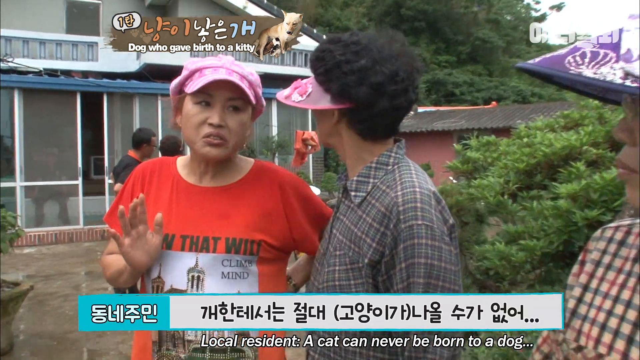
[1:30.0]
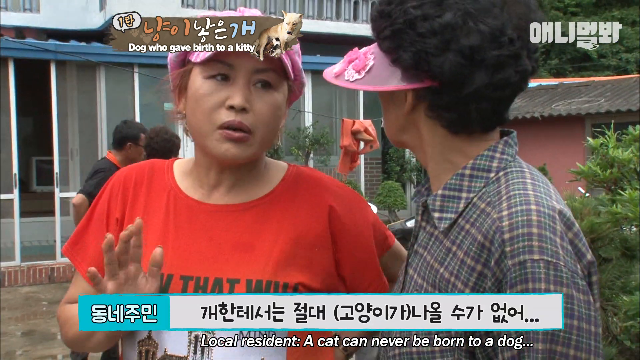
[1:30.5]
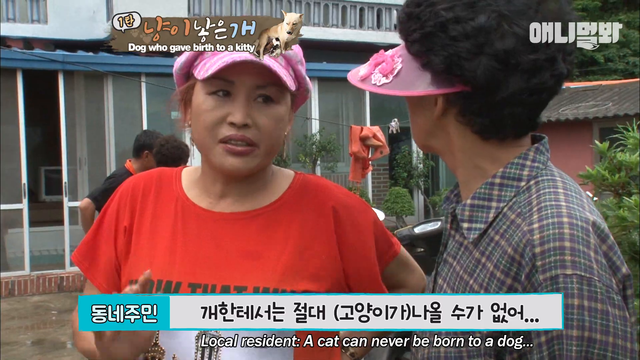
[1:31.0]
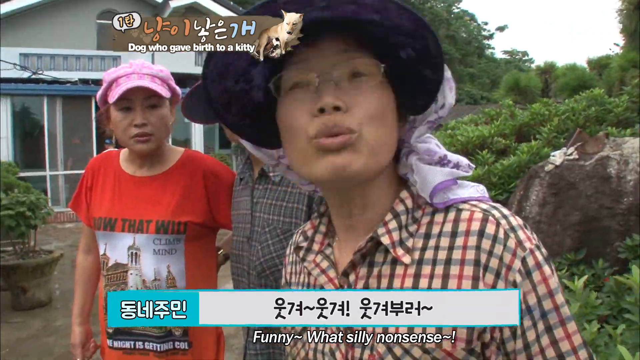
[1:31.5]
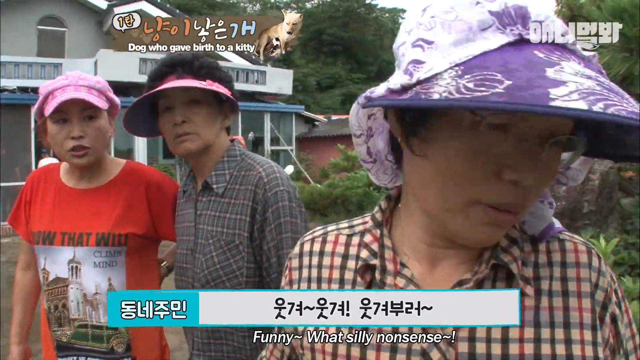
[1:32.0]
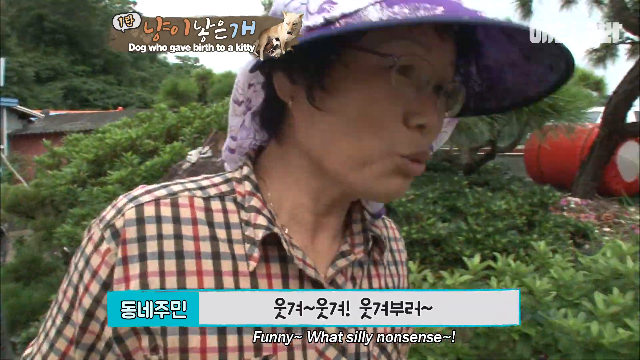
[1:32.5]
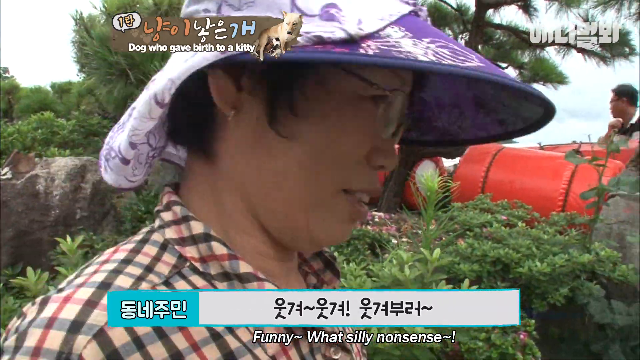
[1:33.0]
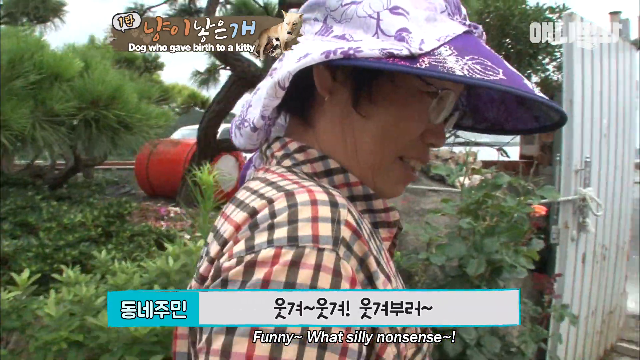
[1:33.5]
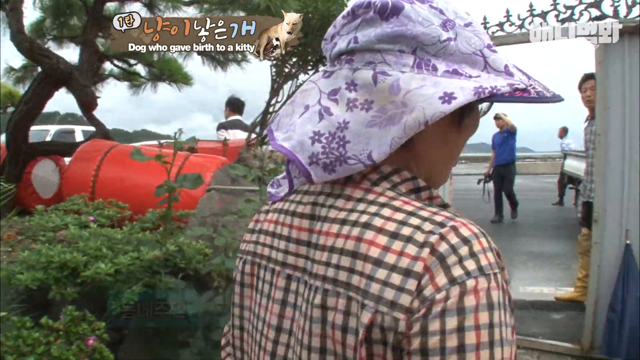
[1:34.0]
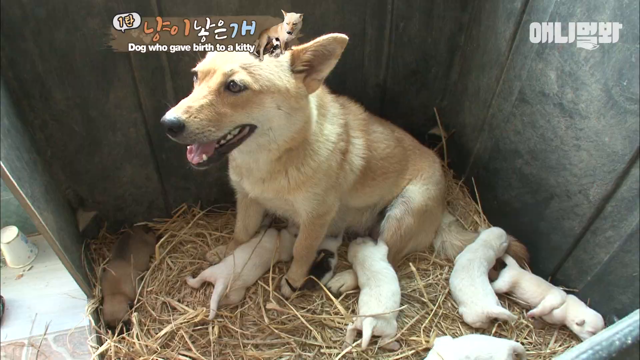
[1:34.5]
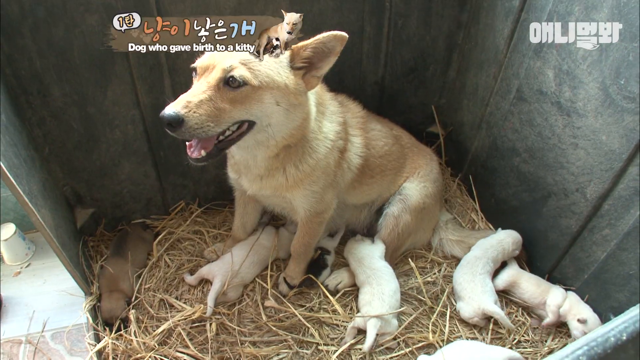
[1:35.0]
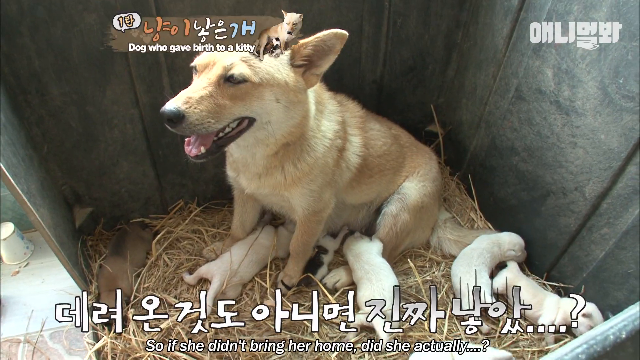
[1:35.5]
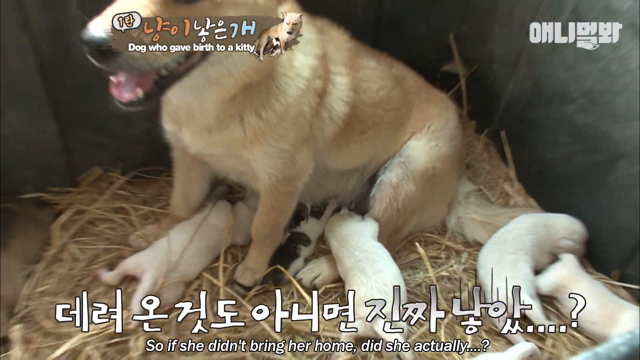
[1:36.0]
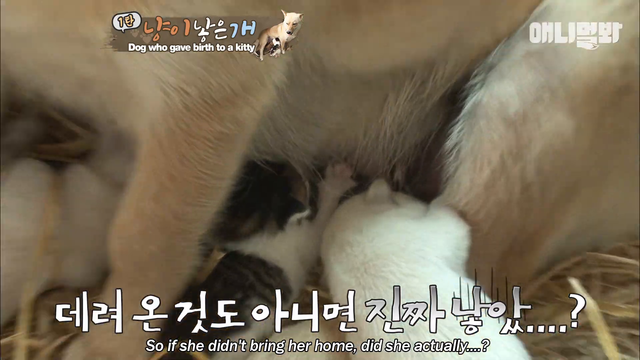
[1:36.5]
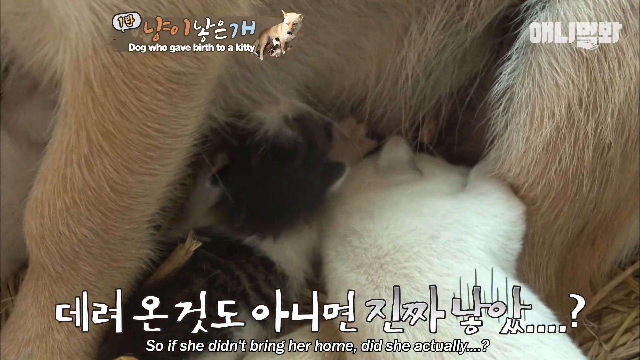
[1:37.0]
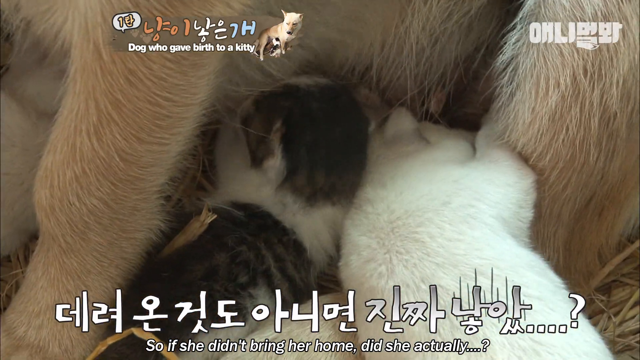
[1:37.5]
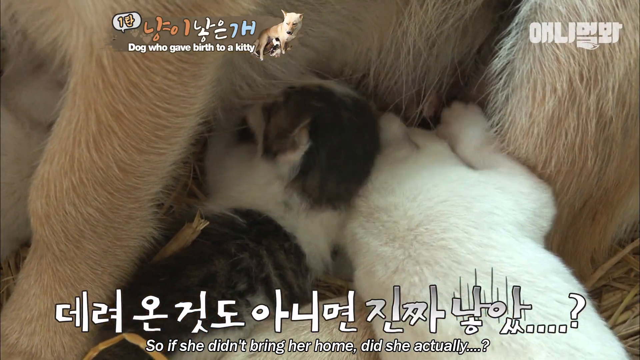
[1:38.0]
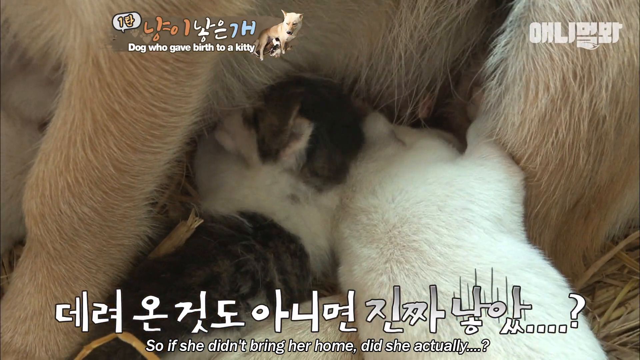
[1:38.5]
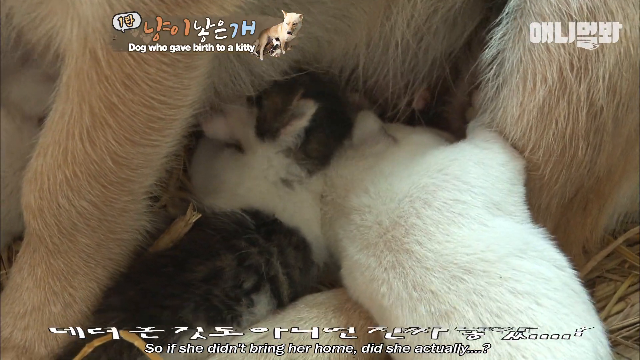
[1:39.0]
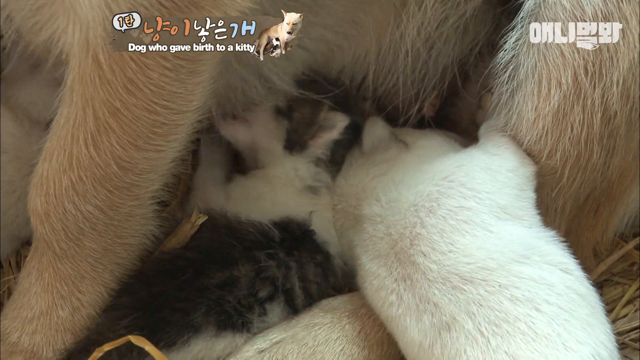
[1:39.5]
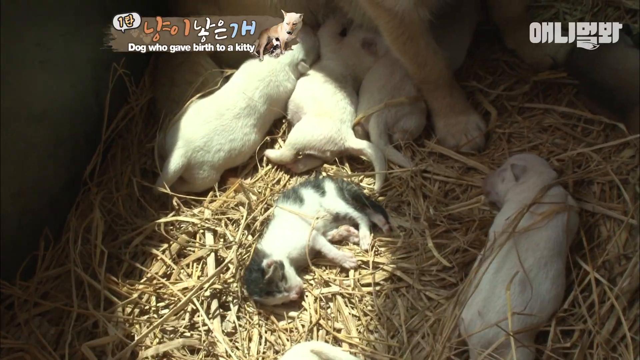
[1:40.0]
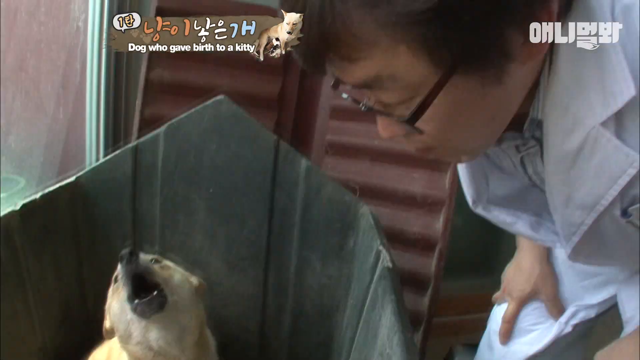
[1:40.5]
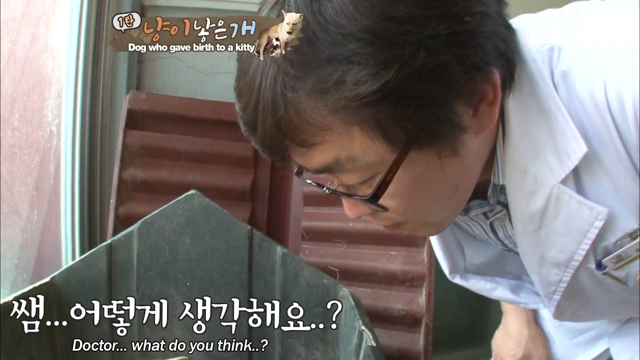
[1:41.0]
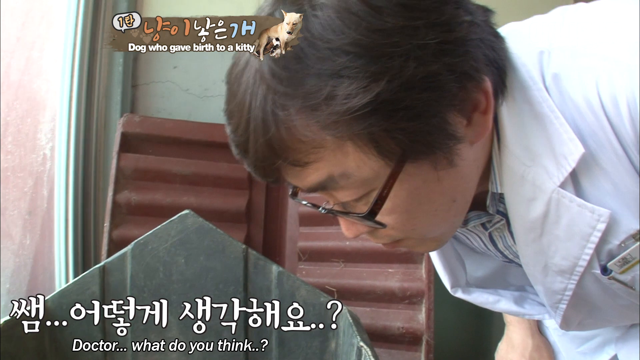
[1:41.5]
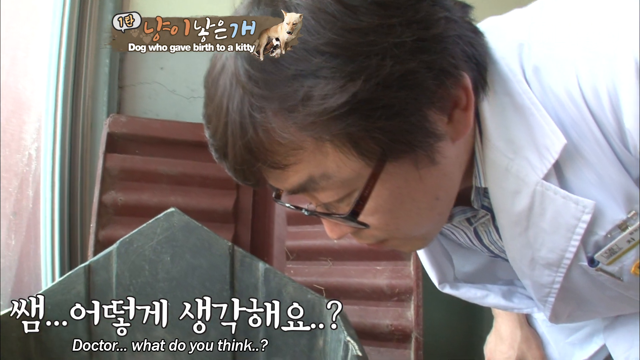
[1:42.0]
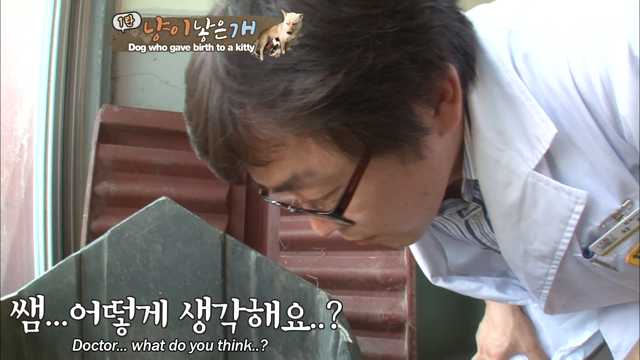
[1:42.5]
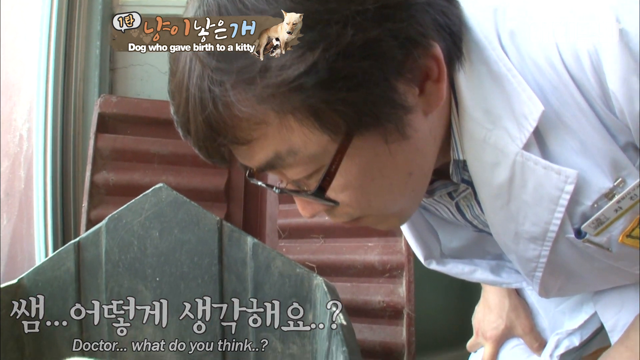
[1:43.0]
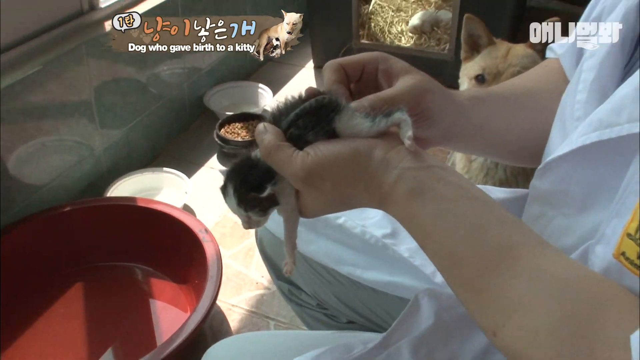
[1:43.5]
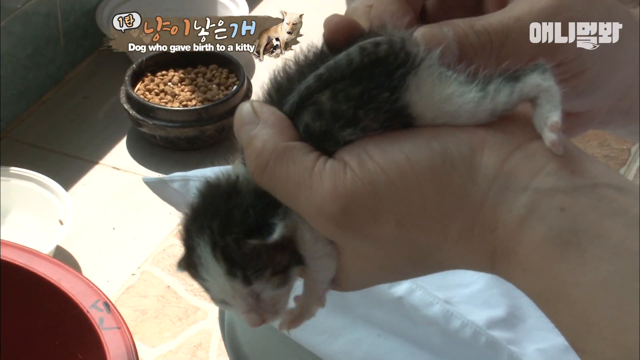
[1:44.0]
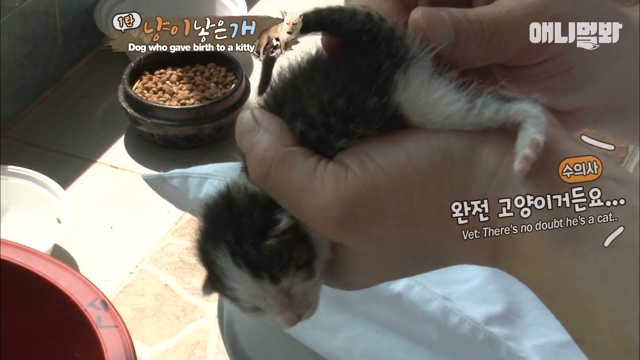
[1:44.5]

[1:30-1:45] Several puppies, a single kitten and a single adult dog are in an enclosure with straw bedding. The video also shows different people being filmed as they talk: one looks like a medical specialist, and others are local residents. The Chinese and English subtitles show them discussing how it is impossible for a kitten to be born to a dog; the doctor and the residents agree on this. They discuss how this could have happened, and at different points they hold the kitten to inspect and look at it.